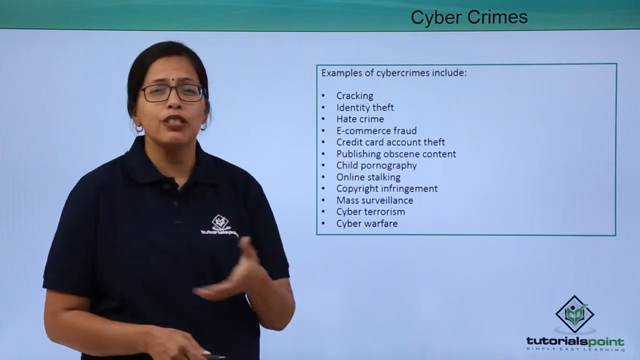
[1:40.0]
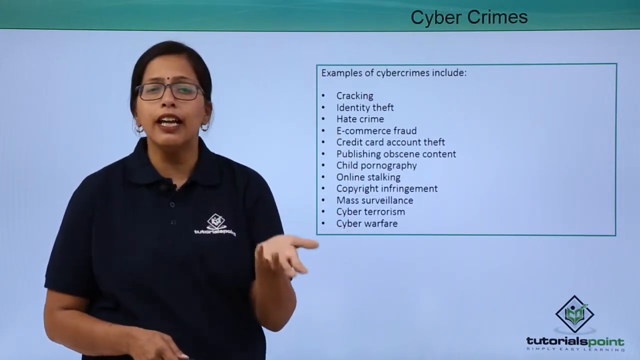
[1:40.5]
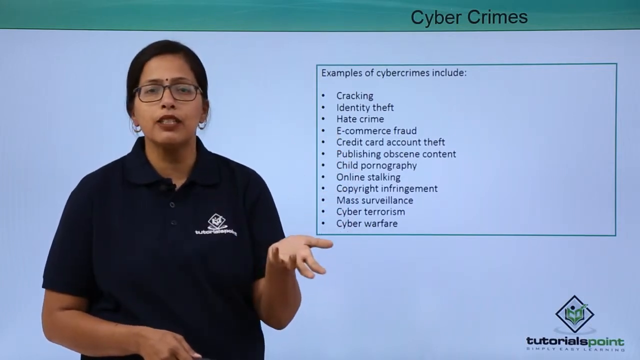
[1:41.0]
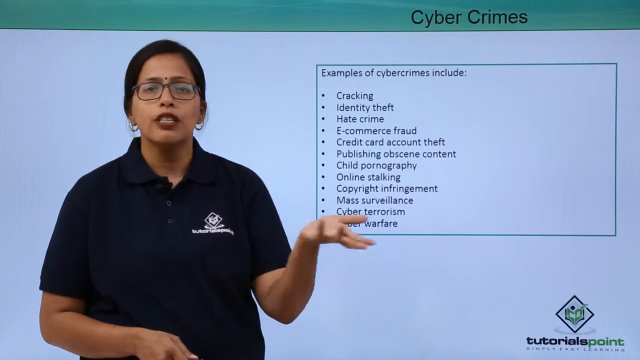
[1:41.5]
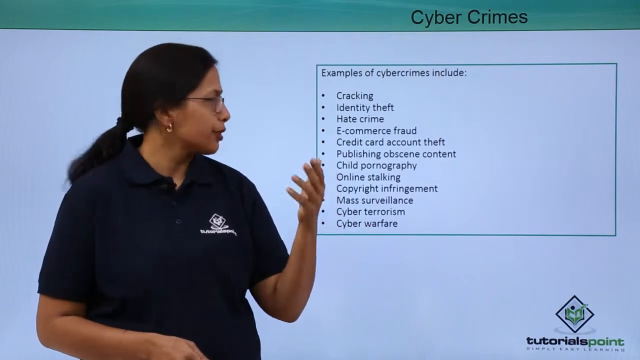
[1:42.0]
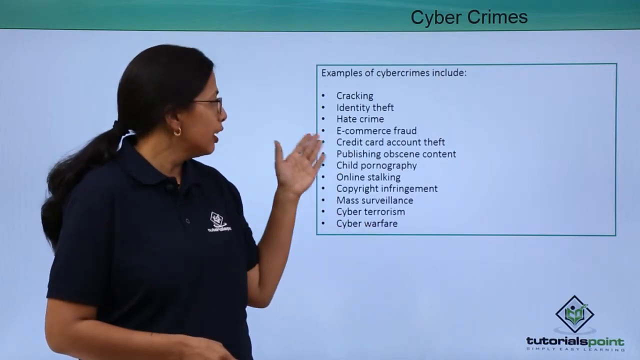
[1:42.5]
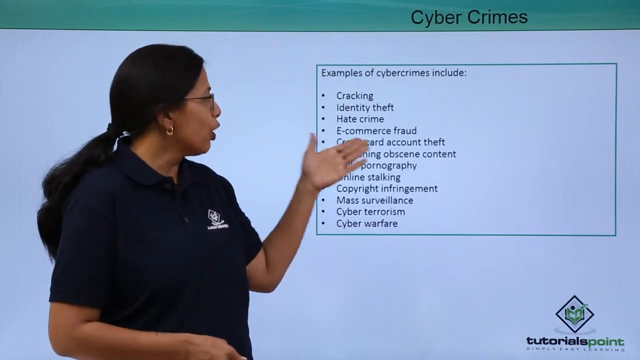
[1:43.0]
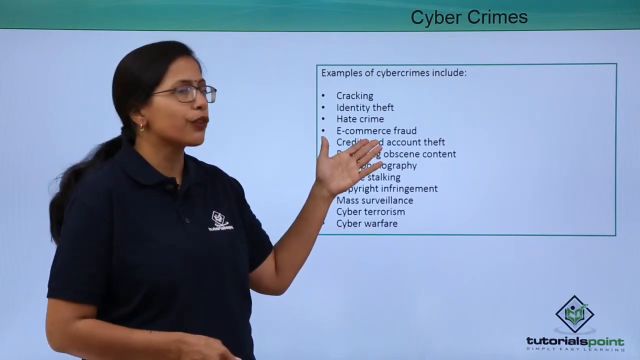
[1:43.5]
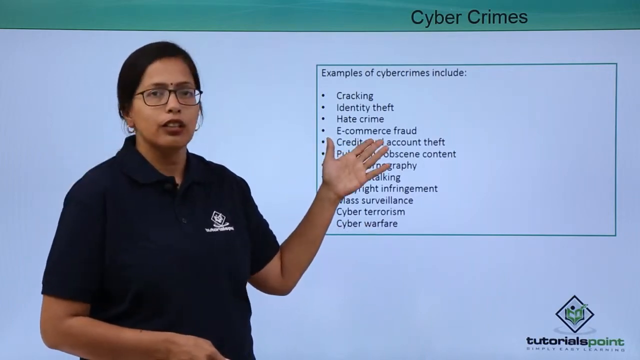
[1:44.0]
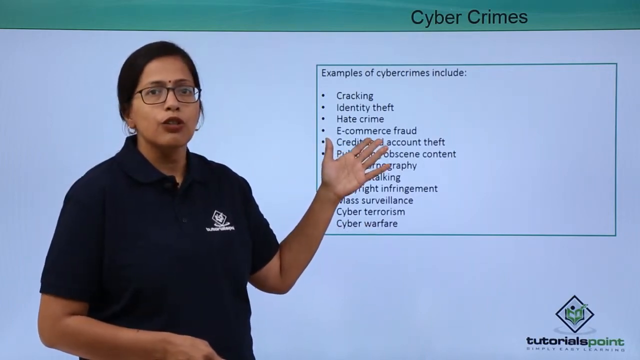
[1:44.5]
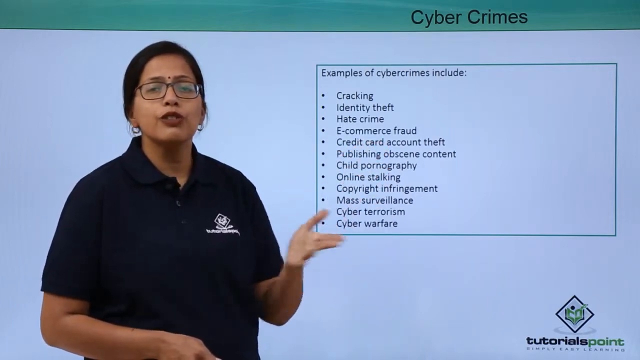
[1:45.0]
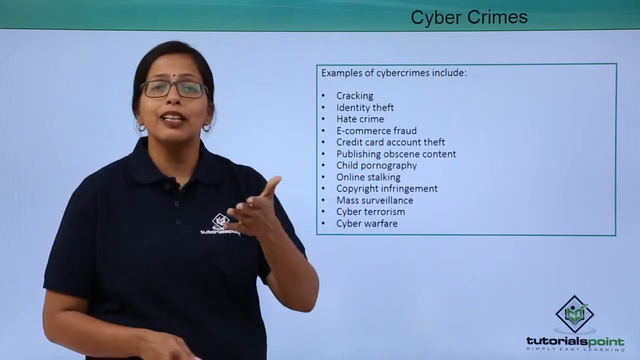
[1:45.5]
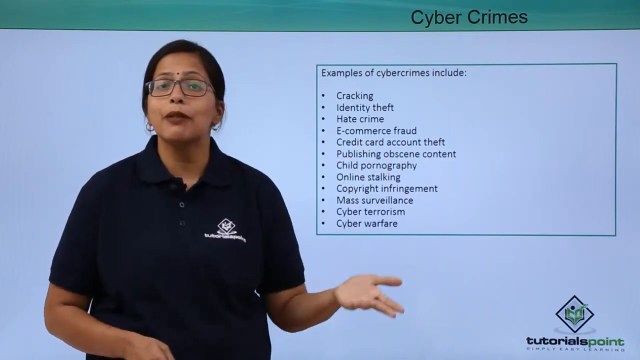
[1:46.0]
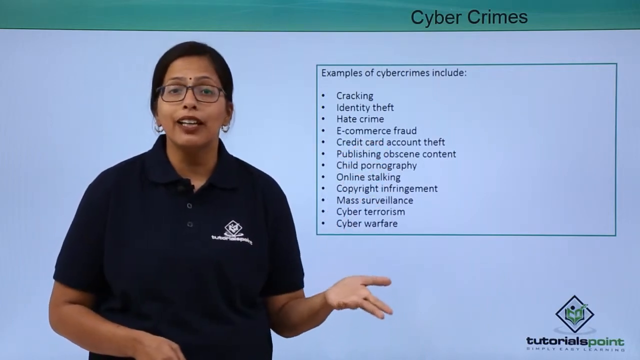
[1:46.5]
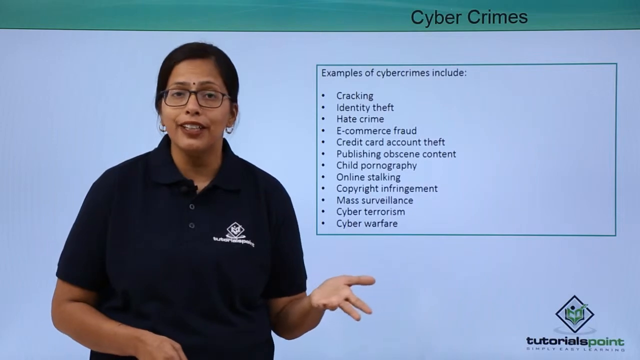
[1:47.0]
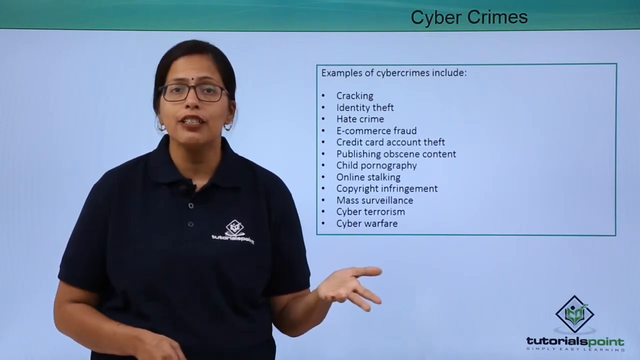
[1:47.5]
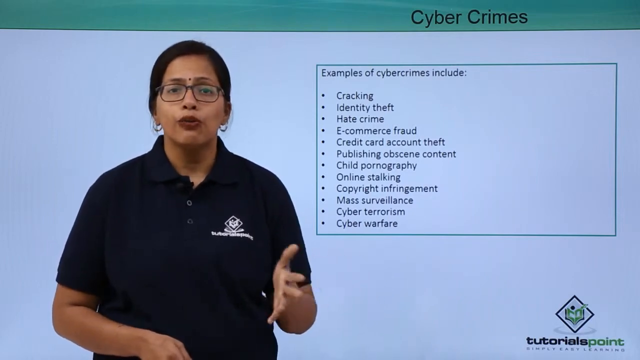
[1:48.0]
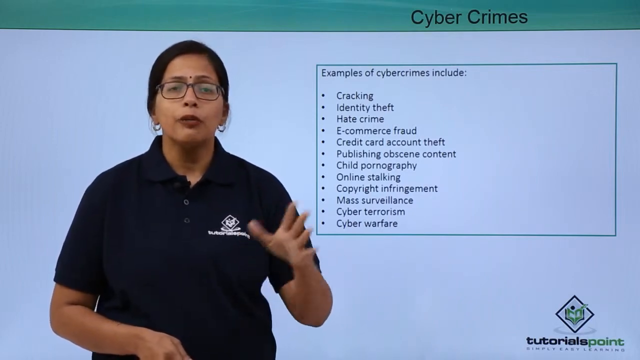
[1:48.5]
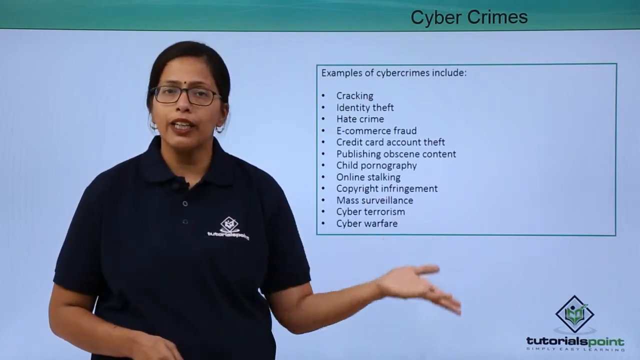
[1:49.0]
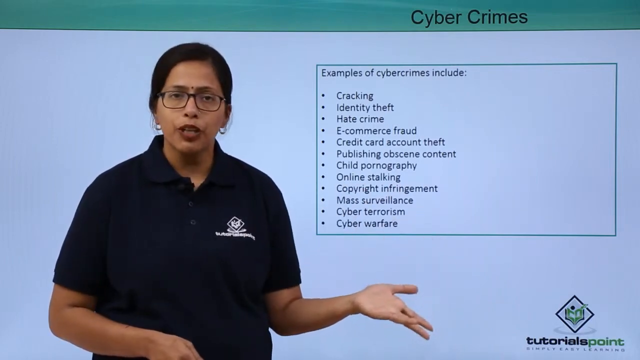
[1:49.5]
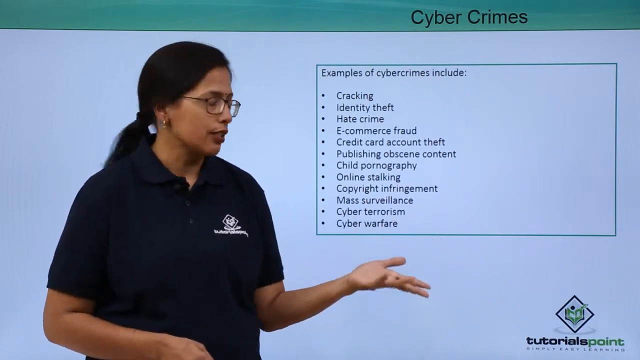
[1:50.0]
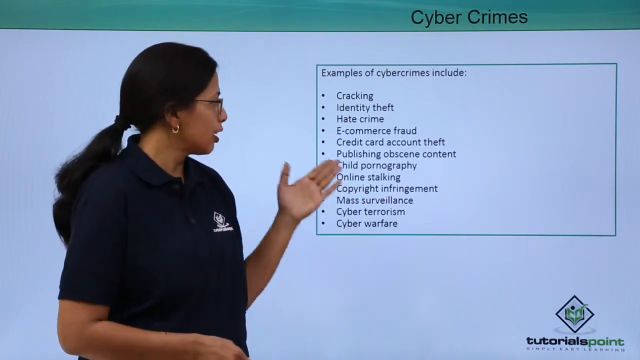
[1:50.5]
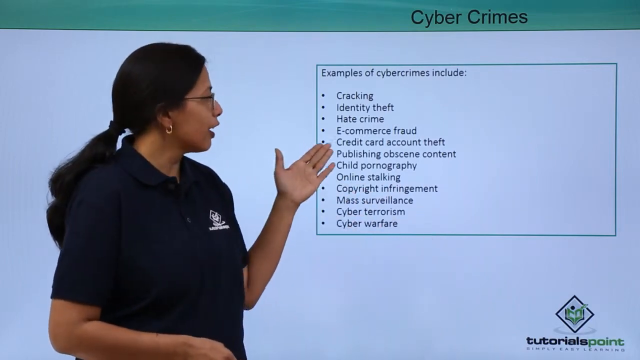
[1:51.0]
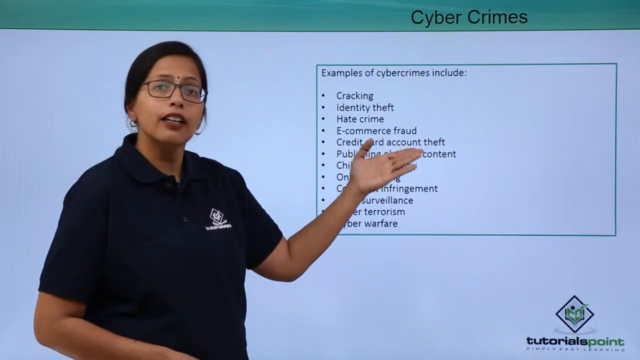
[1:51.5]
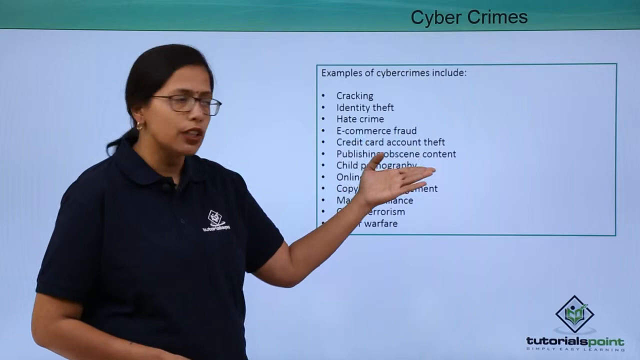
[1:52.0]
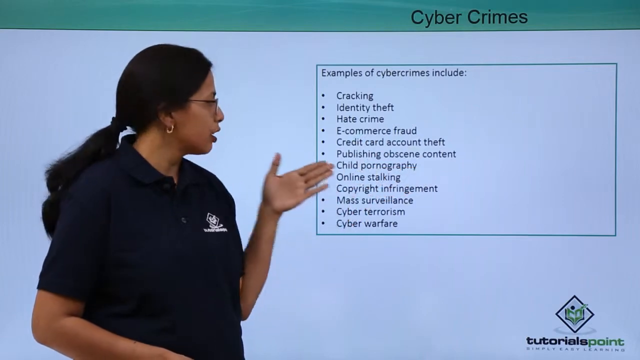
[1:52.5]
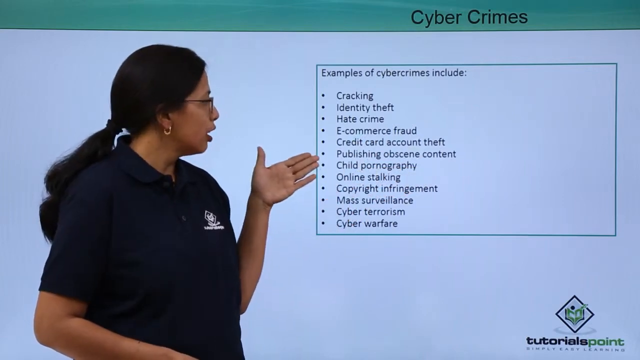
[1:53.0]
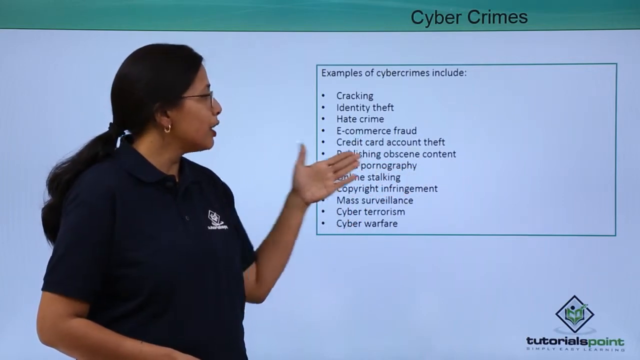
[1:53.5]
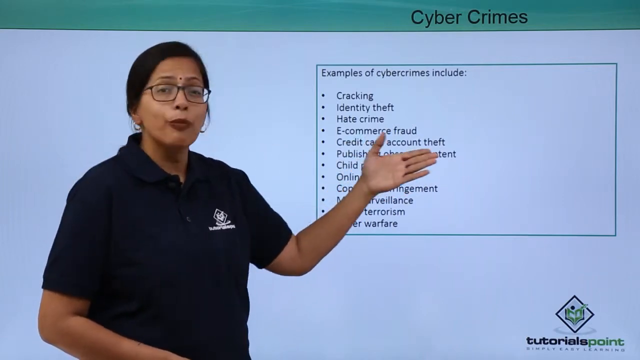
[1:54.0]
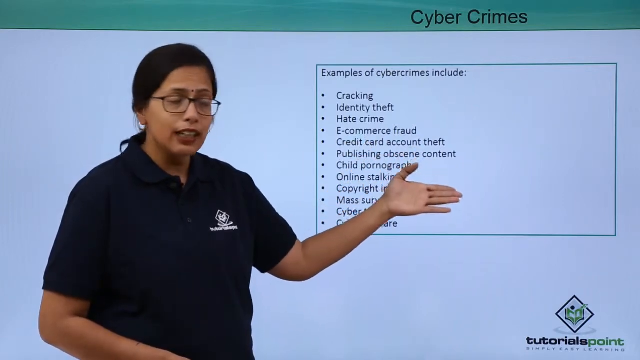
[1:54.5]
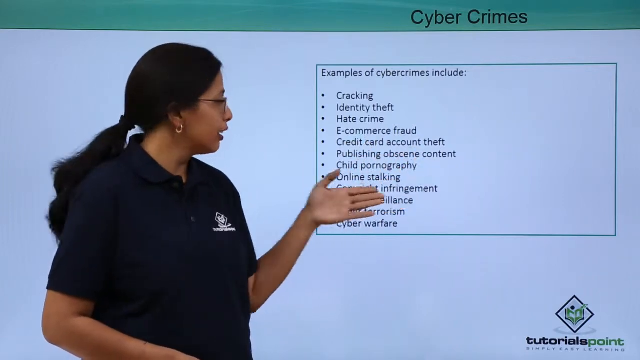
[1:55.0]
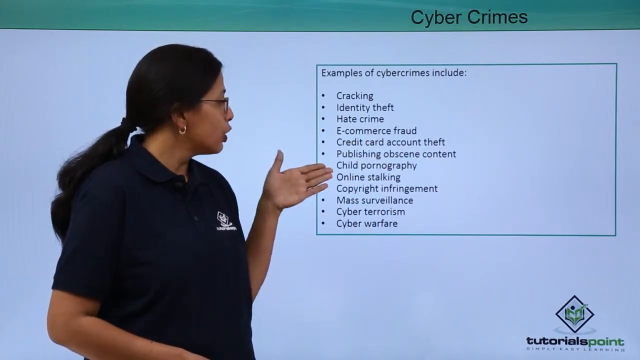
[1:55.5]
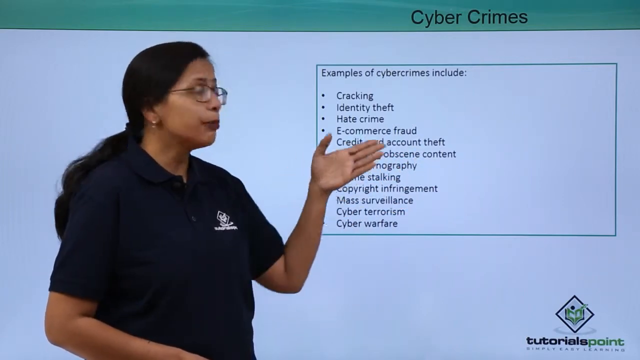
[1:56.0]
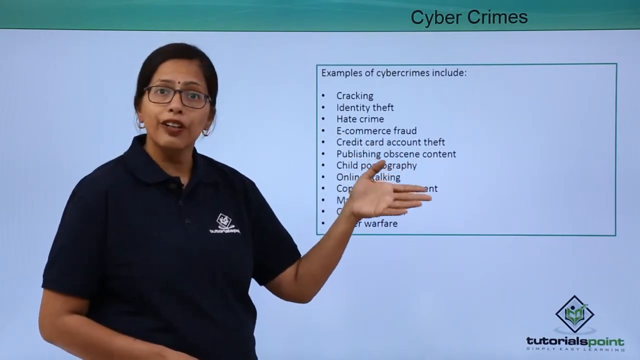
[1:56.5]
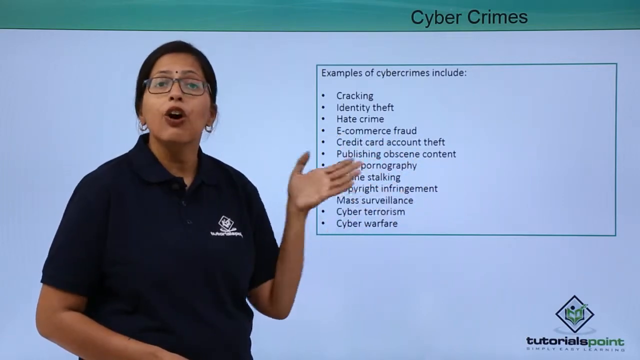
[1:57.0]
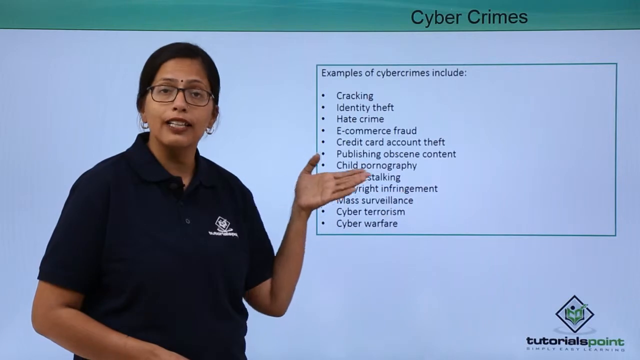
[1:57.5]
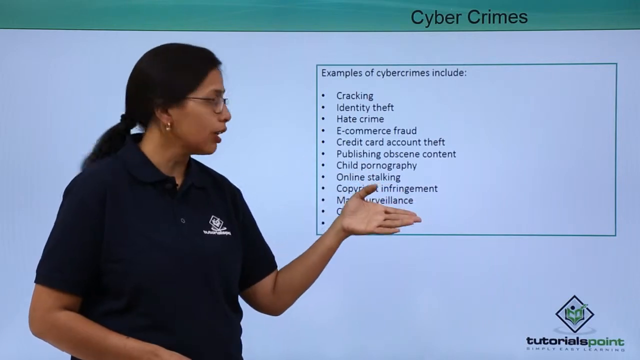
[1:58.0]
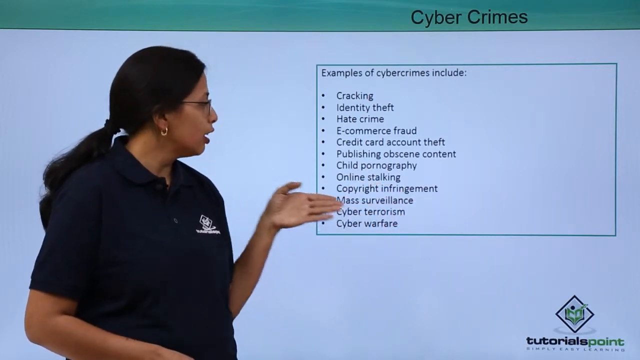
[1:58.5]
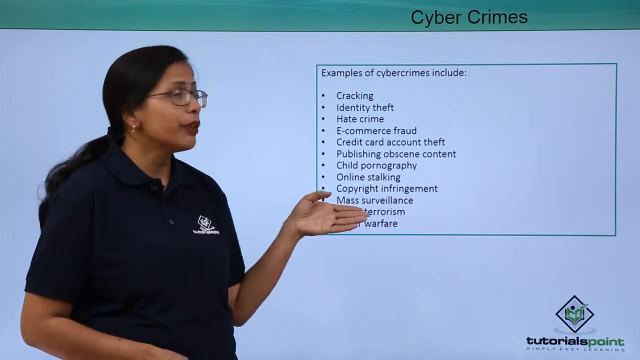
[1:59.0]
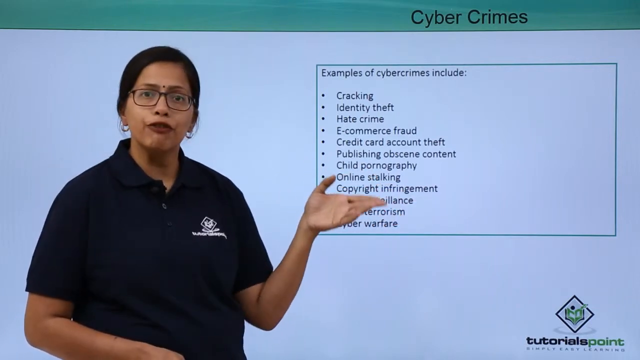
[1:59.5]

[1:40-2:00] A female lecturer, an Indian lady, wears a black t-shirt with the logo of the tutorial company Tutorials Point and the slogan "Simply Easy Learning" embroidered in white. The t-shirt has two buttons, and her microphone is attached to the collar. She wears two small hoop earrings, glasses and burgundy lipstick, and has a black dot in the middle of her eyebrows. The slide illustrates examples of cybercrimes in bullet form: cracking, identity theft, hate crime, e-commerce fraud, credit card account theft, publishing obscene content, child pornography, online stalking, copyright infringement, mass surveillance and cyberterrorism. The list is inside a green-bordered square that is white inside. The heading of the slide, "Cybercrimes", is written in black on a green background.